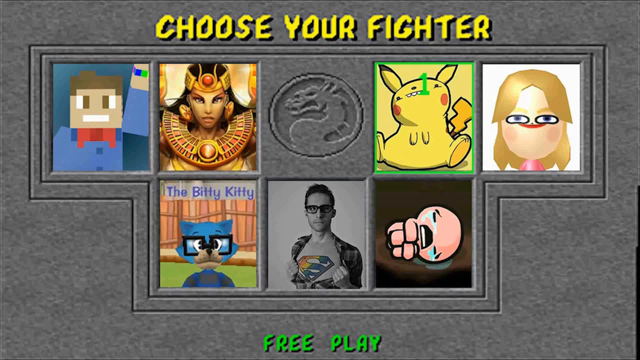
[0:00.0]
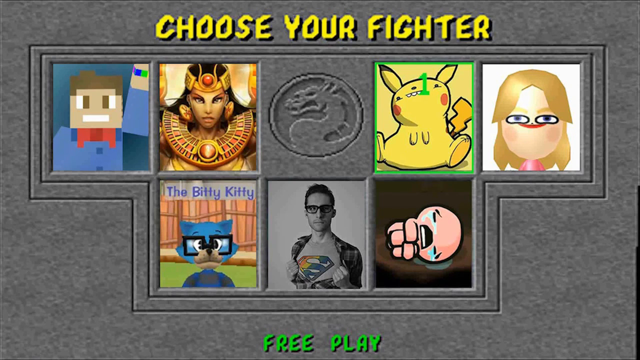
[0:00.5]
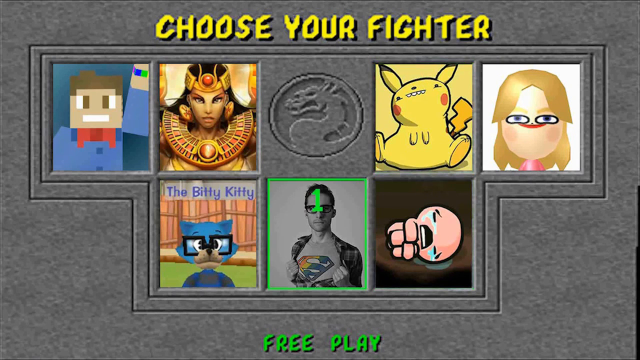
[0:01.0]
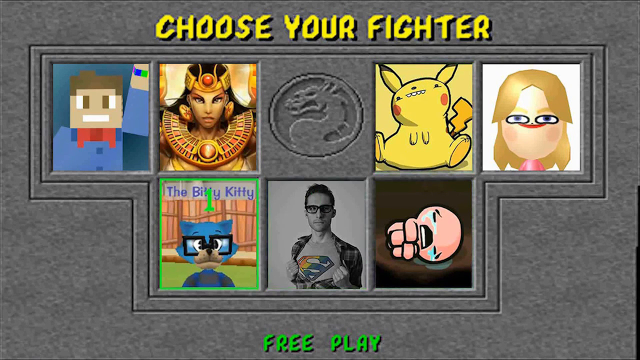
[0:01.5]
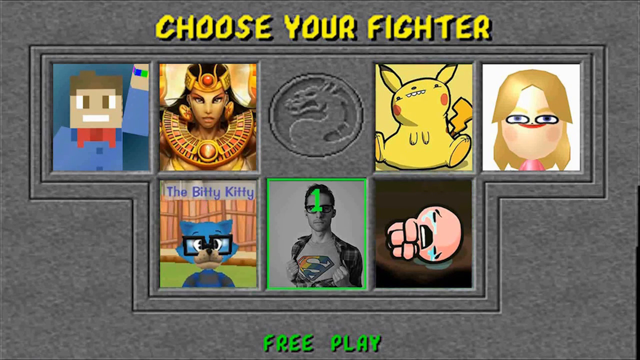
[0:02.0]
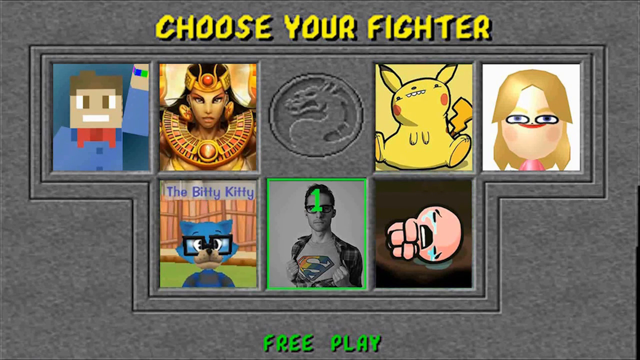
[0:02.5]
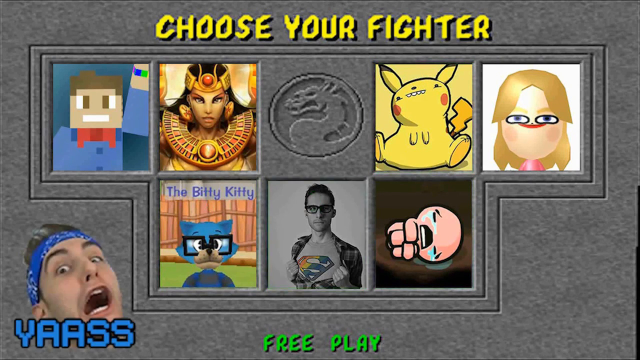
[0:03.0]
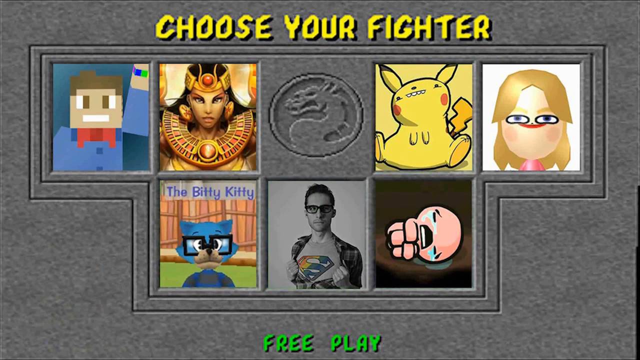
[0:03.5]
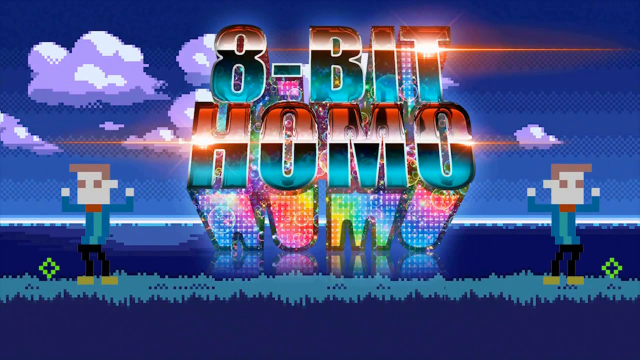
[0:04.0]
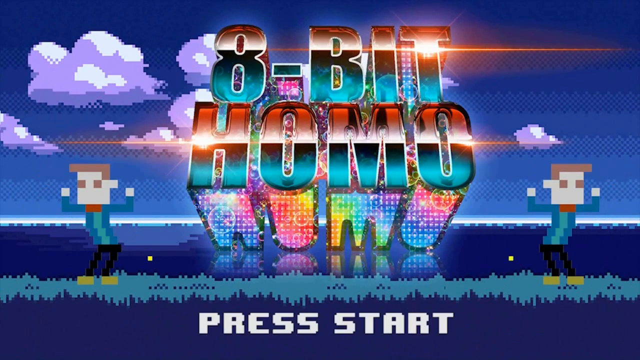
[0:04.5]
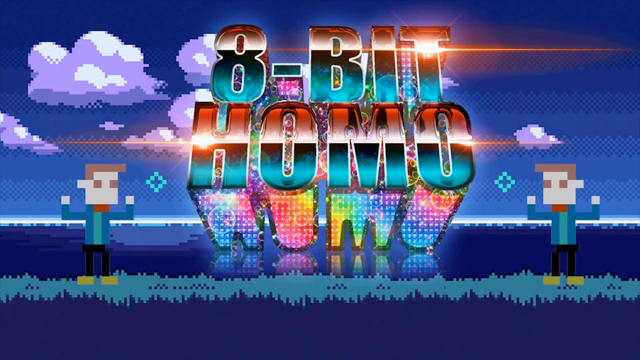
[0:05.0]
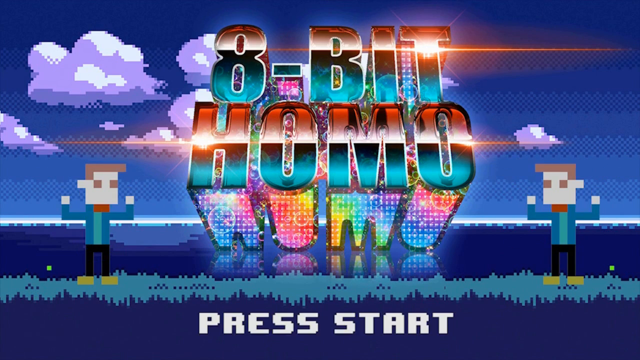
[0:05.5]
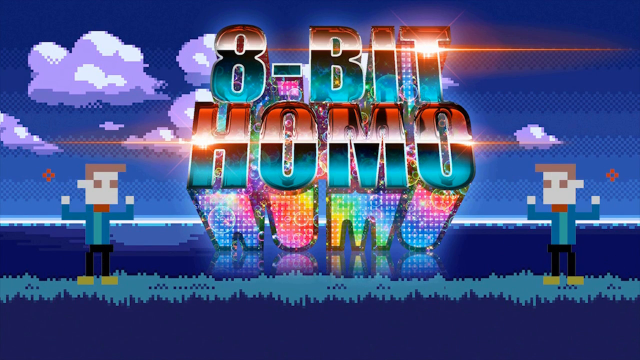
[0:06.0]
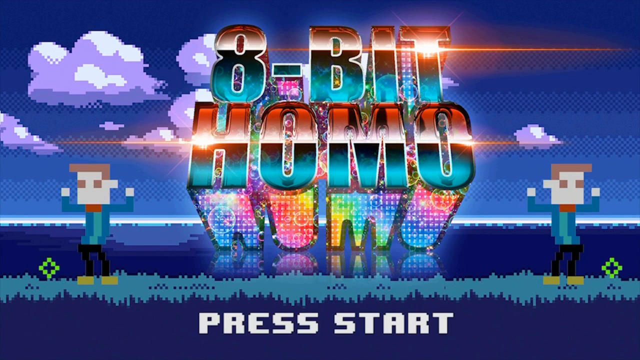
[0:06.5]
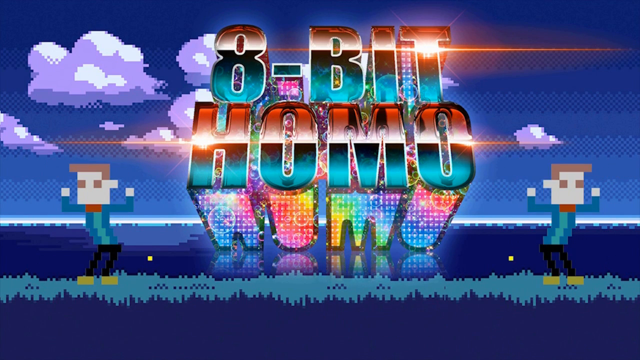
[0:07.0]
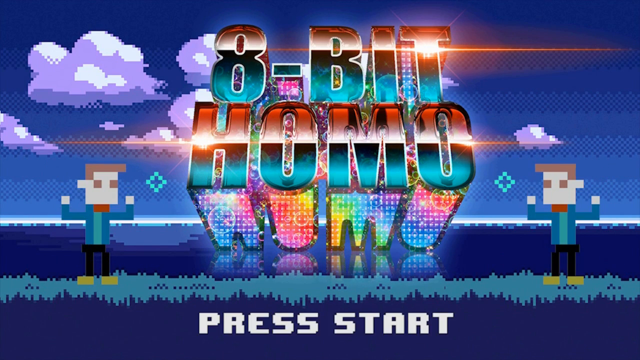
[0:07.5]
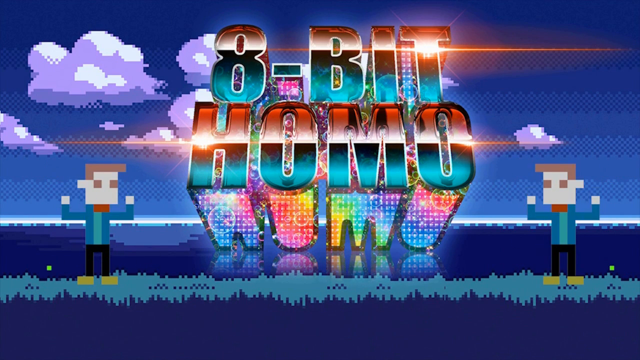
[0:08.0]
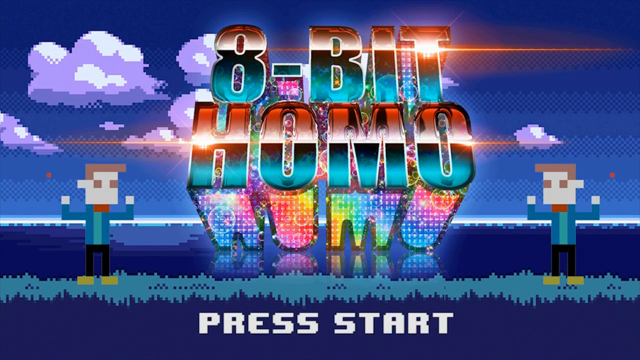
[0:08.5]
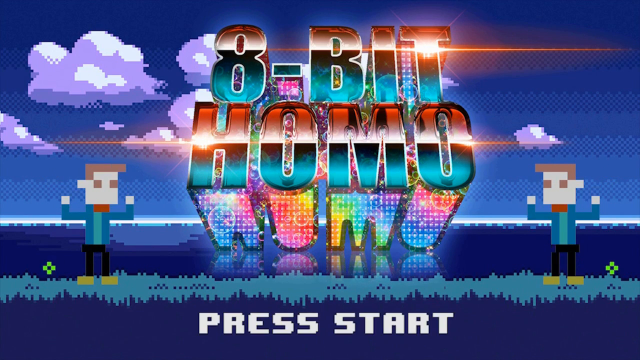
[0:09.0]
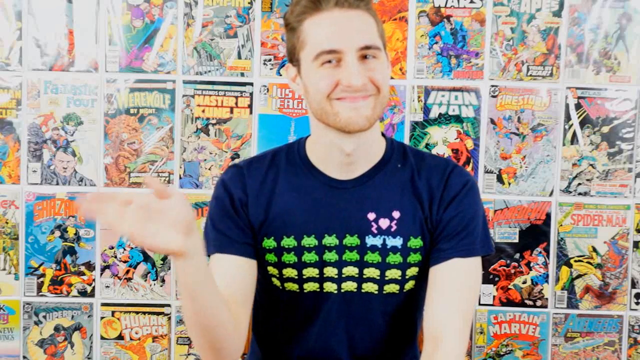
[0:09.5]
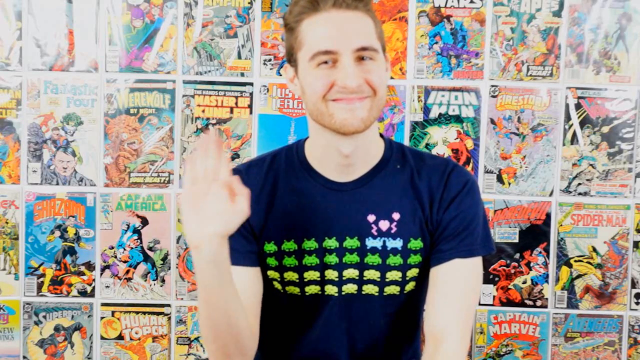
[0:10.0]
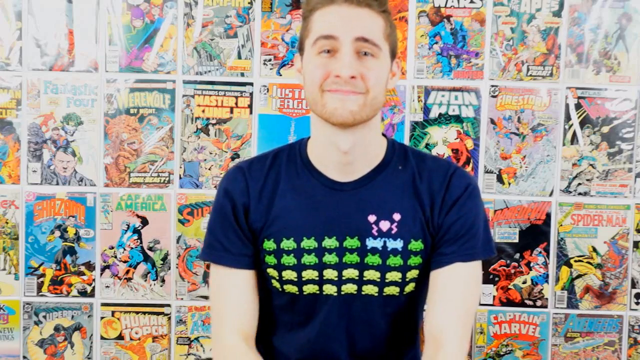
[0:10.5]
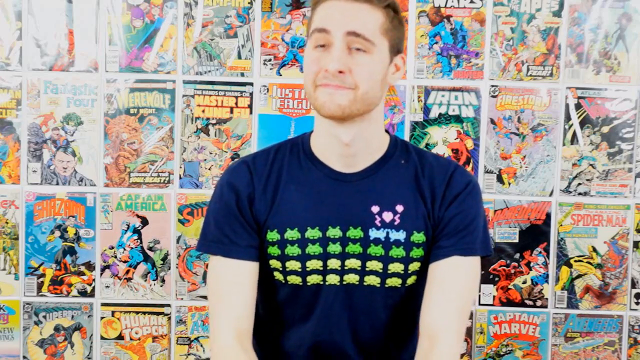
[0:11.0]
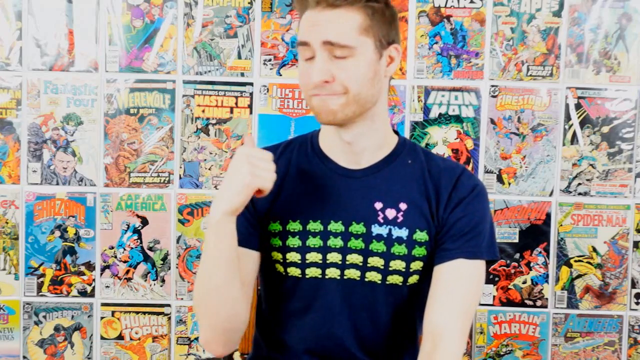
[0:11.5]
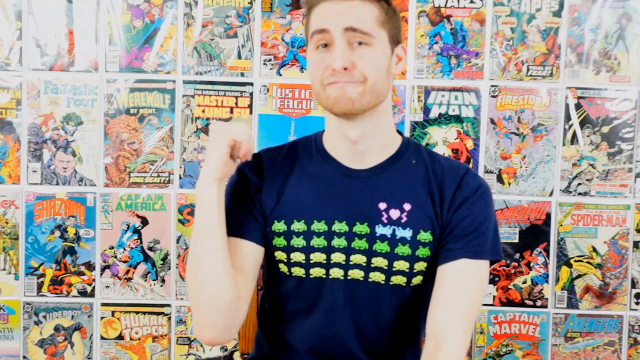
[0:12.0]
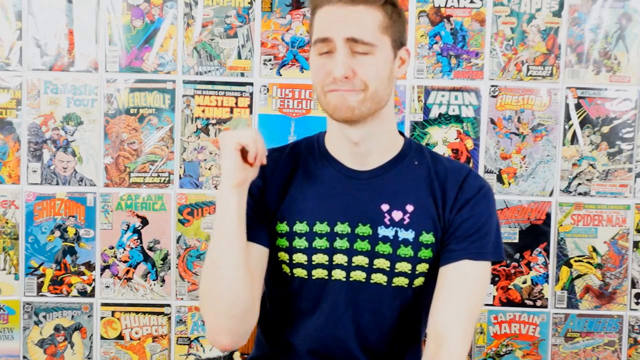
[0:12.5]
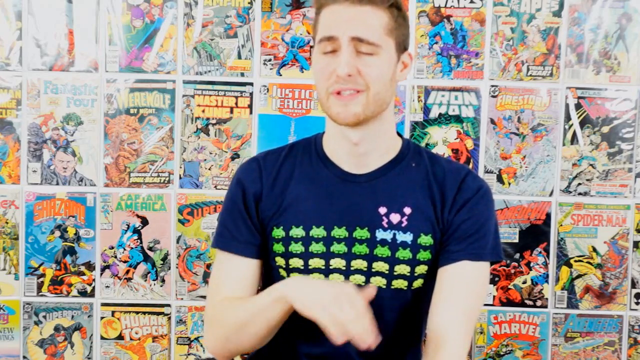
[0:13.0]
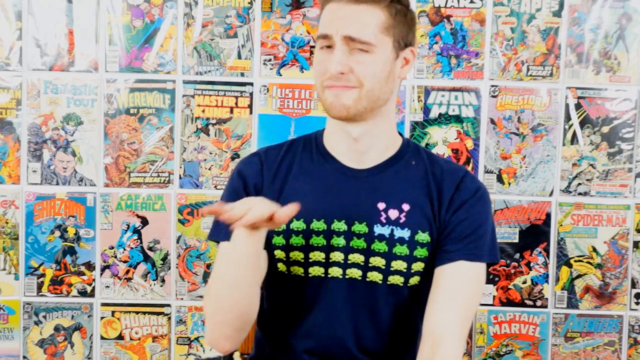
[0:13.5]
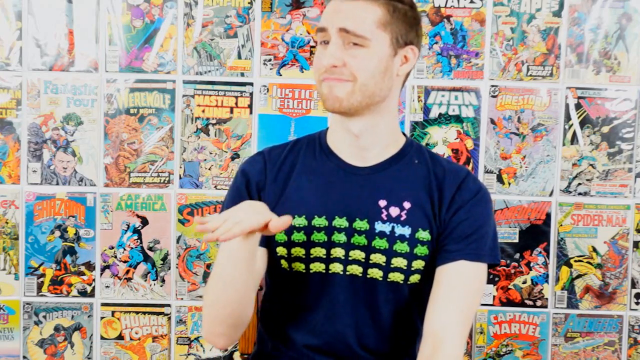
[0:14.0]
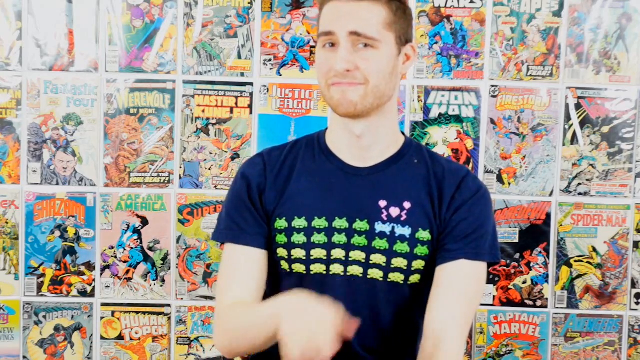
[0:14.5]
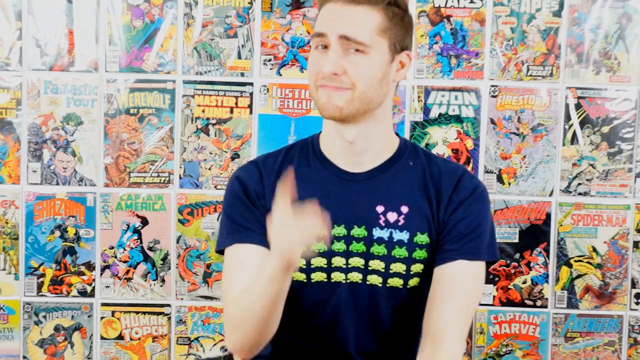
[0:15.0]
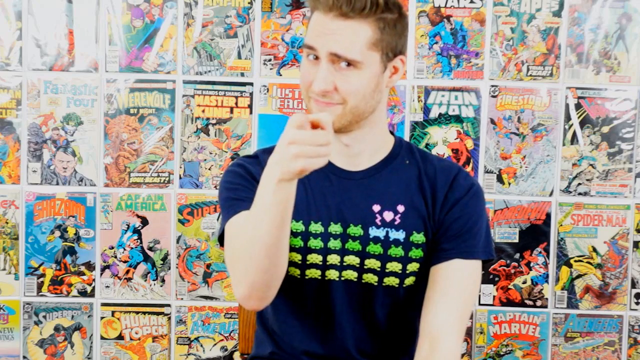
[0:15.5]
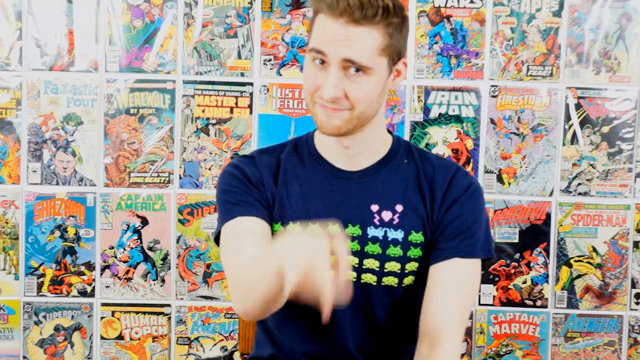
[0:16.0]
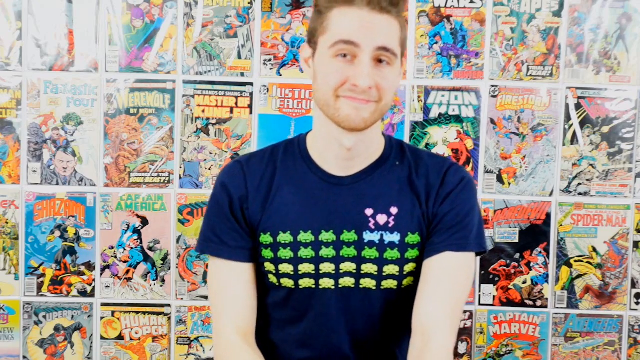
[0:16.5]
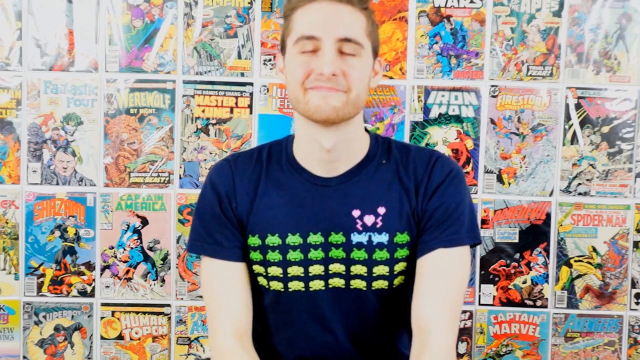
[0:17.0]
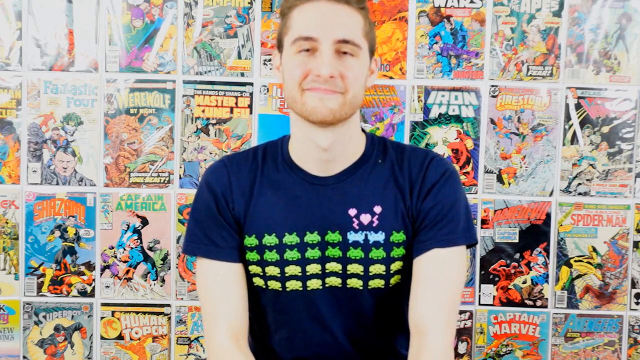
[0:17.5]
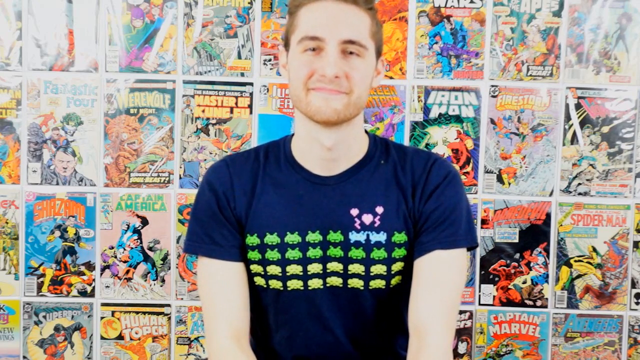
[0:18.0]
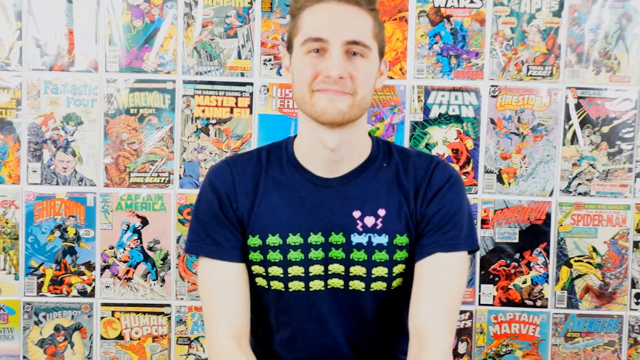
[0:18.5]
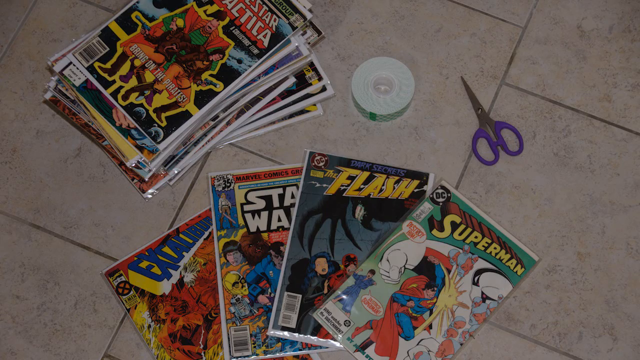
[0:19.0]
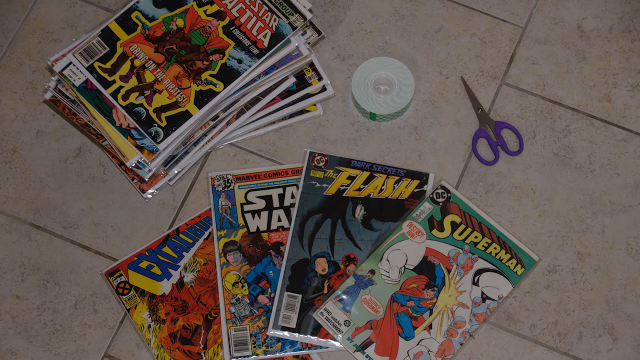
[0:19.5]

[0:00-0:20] The video opens on a screen with a gray stone-colored background and what looks like eight square options for different fighters. At the top of the screen, horizontal yellow text reads "choose your fighter," and below it are eight boxes of different characters. From left to right on the top row are a Minecraft character, what looks like an Egyptian goddess, a dragon stone carving, Pikachu, and an animated character that looks like a girl with a huge face. On the bottom row is "the bitty kitty," a blue cat with glasses; to its right is a middle-aged man with a Superman tattoo on his chest; and to the right of that is an animated baby lying down in a fetal position, apparently crying. Next, very colorful text reads "8-bit homo," with two animated Minecraft-like characters dancing, one on the left and one on the right, and "press start" below, against a blue sky-like background. The scene then changes to an actual person in a dark blue shirt who waves and points behind him, where comic books are arranged from top to bottom. He does not speak but uses different hand motions, pointing at the camera and nodding his head up and down.